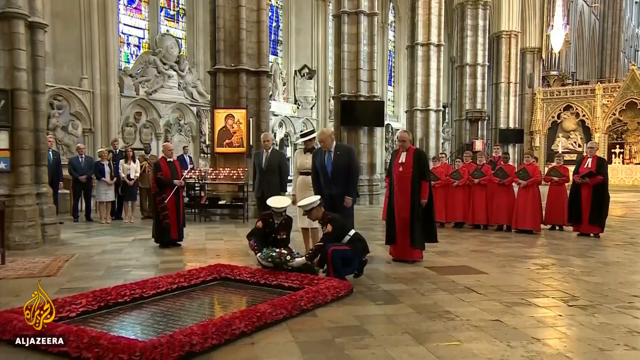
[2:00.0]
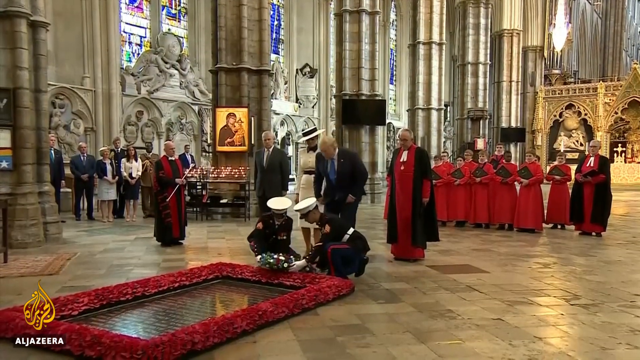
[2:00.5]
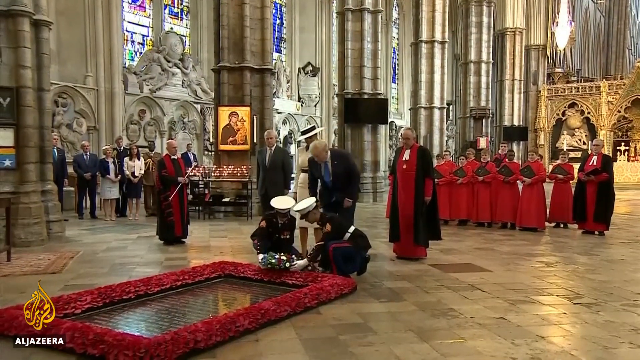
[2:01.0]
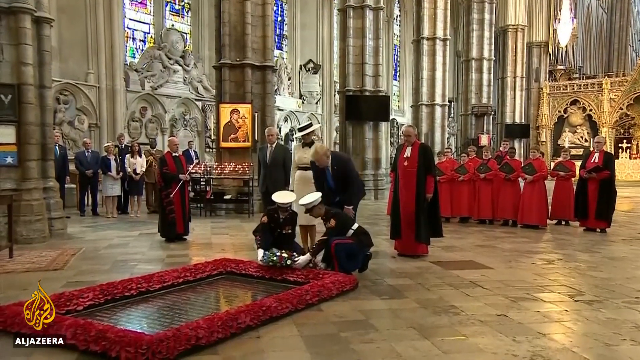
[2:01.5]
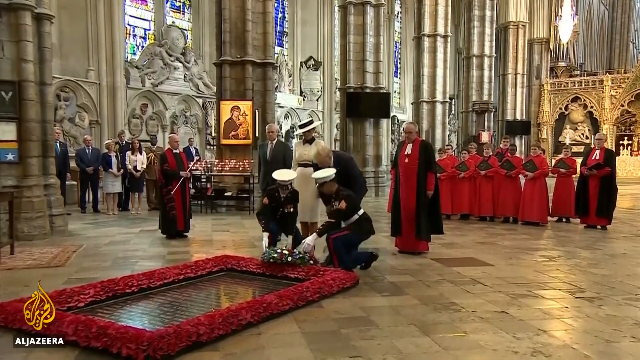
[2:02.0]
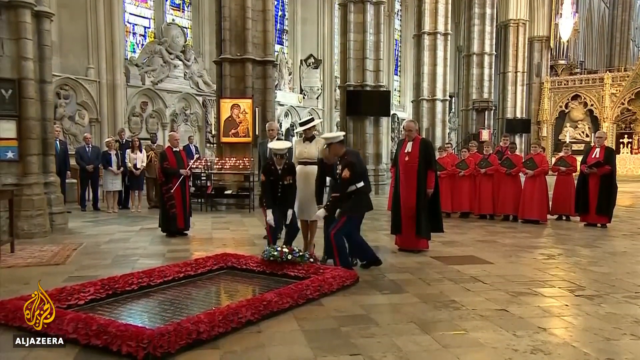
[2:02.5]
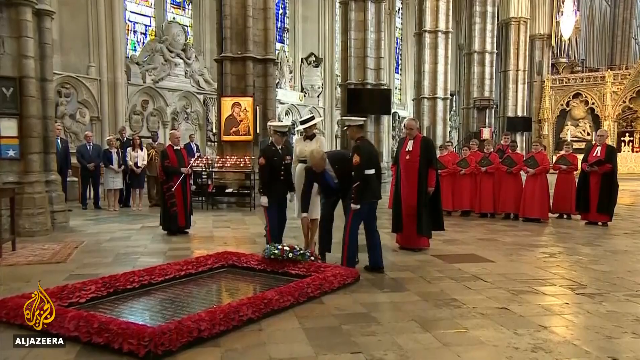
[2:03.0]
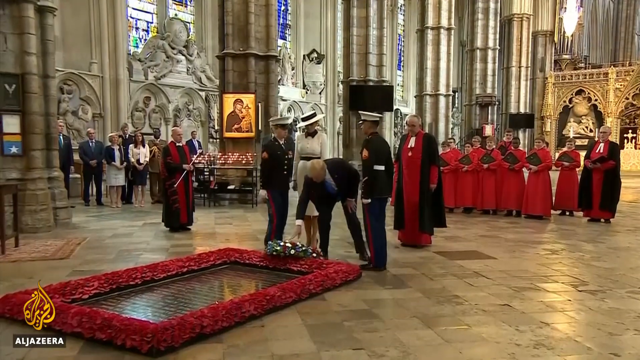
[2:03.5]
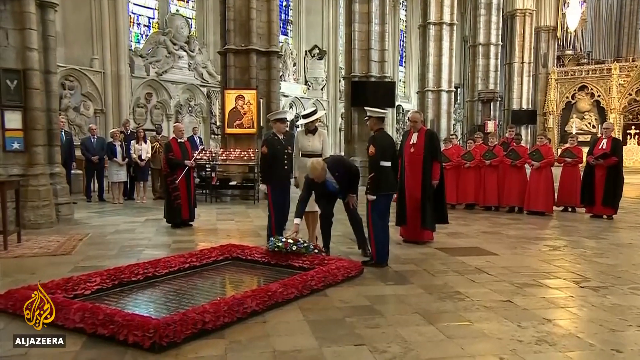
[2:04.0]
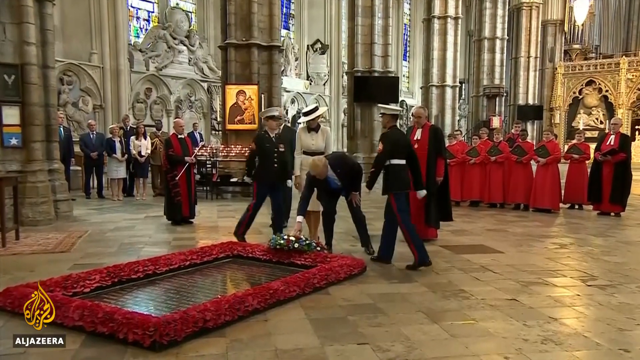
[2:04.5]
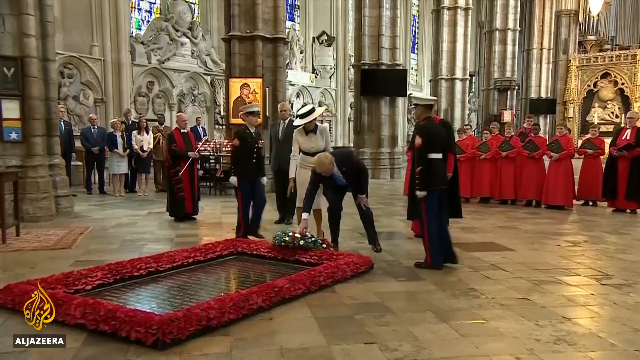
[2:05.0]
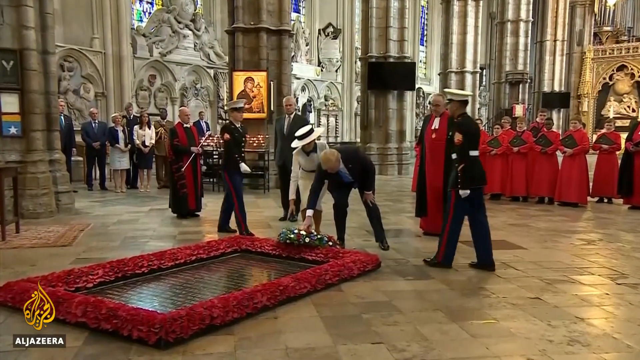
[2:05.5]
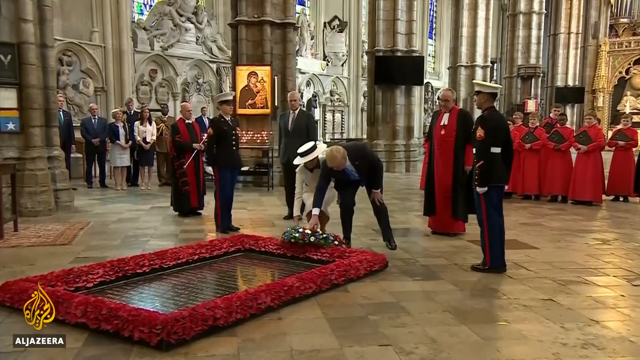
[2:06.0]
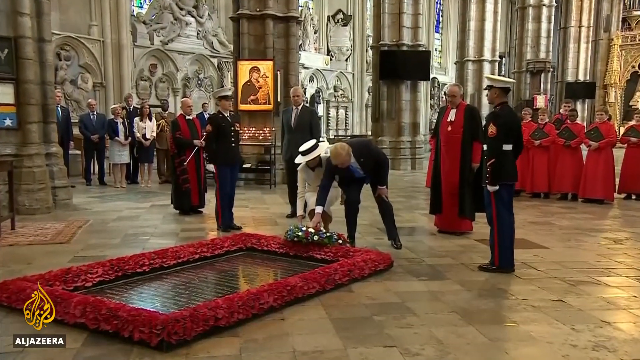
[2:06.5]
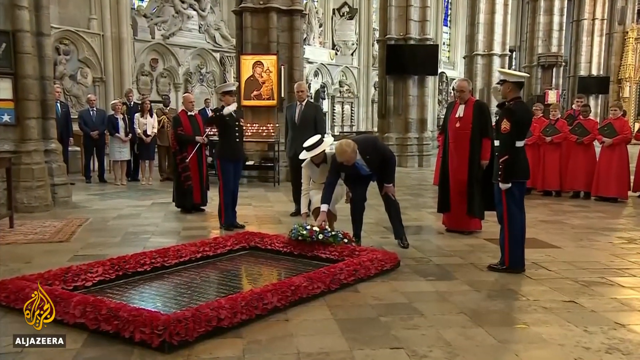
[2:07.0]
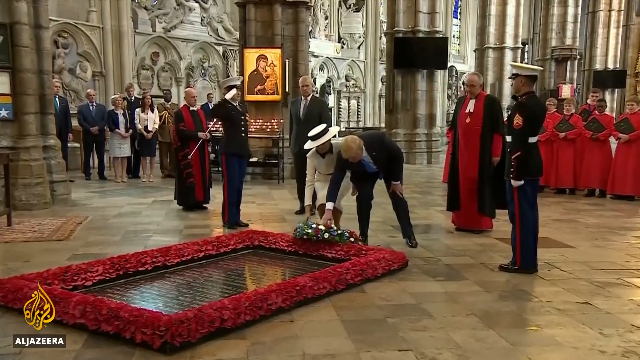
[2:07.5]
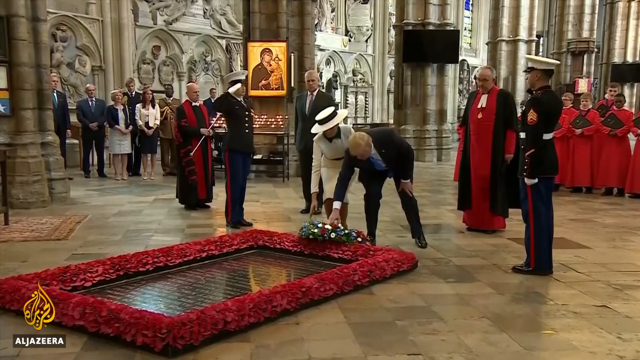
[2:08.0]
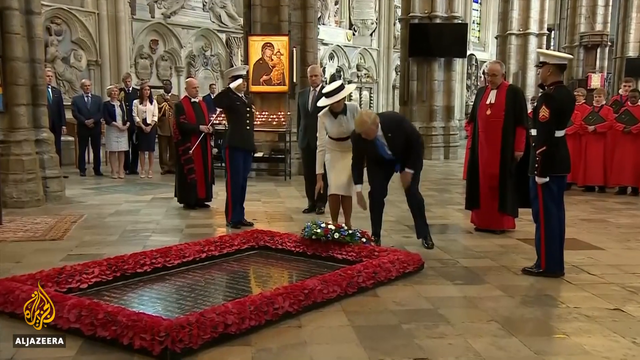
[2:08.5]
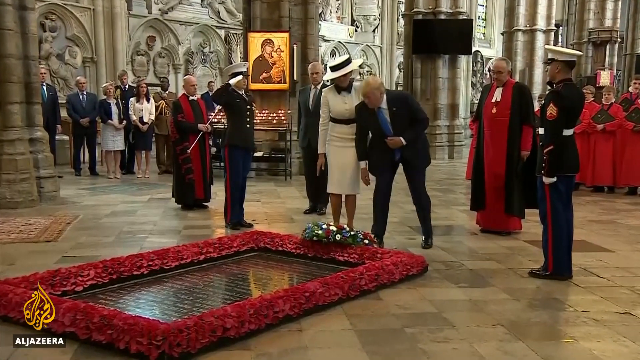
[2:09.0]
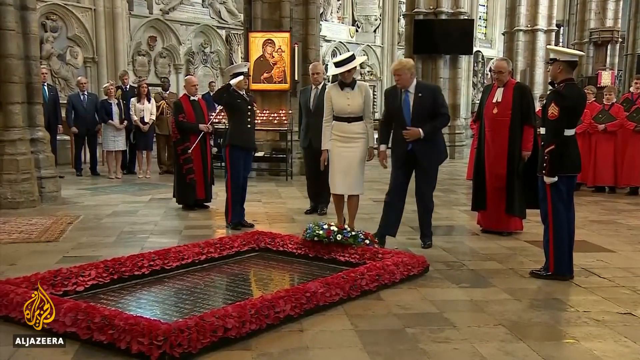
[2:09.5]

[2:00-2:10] A ceremony takes place inside a building. Donald Trump is in the center of the screen, facing the bottom left, with a man in a gray suit on his left and a man in a black suit on his right. Behind them appears to be a choir. In front of Trump, two Marines face each other holding a wreath, kneel down and place it on the floor around some red flowers. Trump bends over with his hands on his knees and reaches down to touch the wreath with his right hand. Melania comes up and touches it with her right hand as well. The Marines stand back, facing Trump, one on the left and one on the right, and both salute with their right hands.